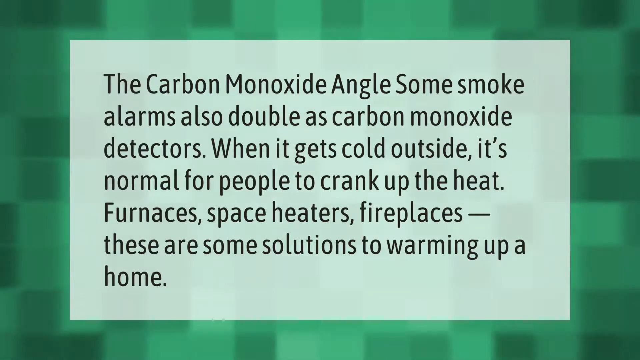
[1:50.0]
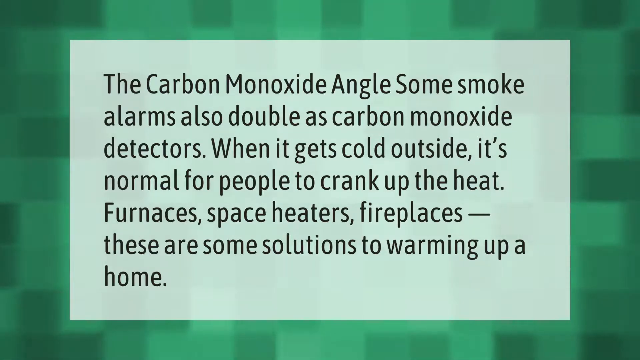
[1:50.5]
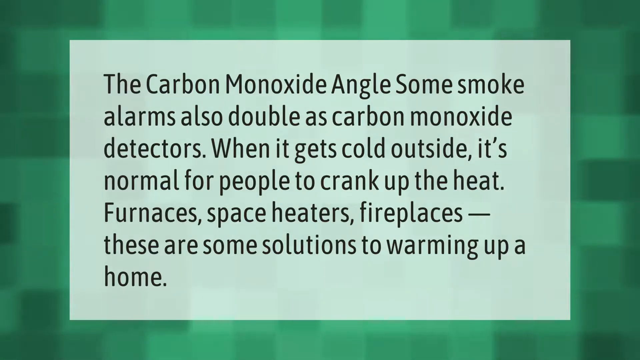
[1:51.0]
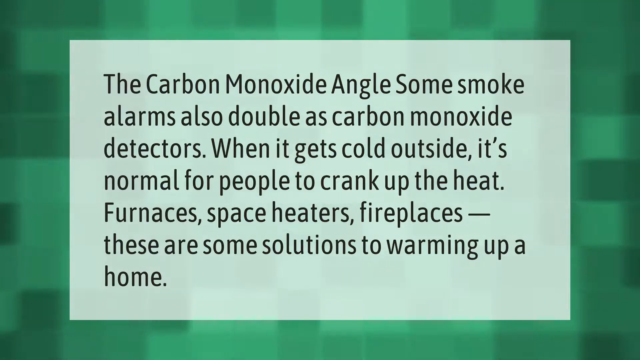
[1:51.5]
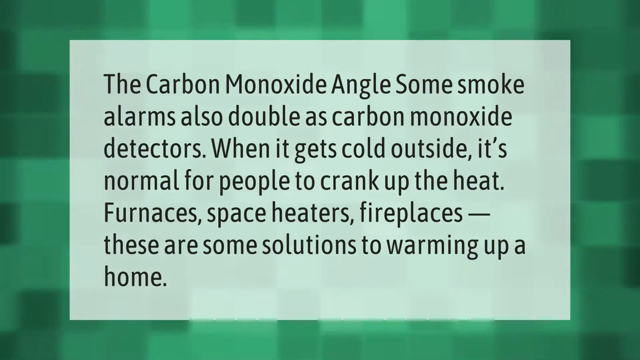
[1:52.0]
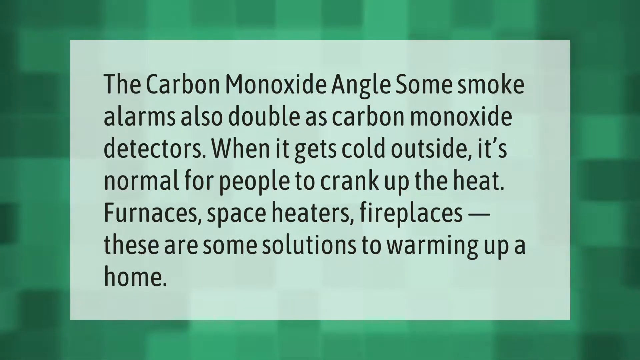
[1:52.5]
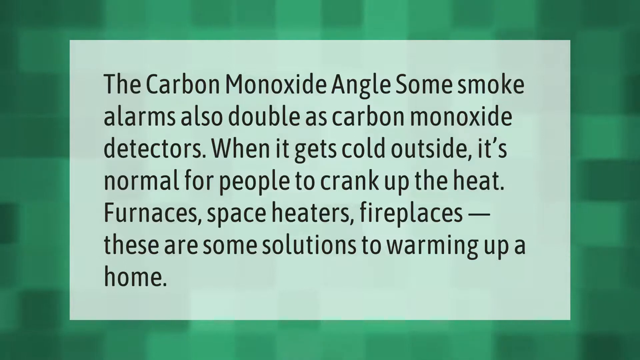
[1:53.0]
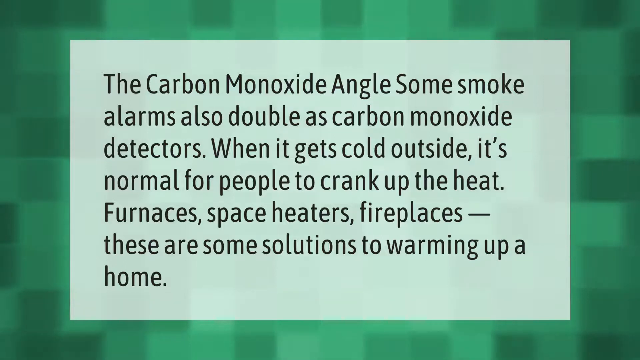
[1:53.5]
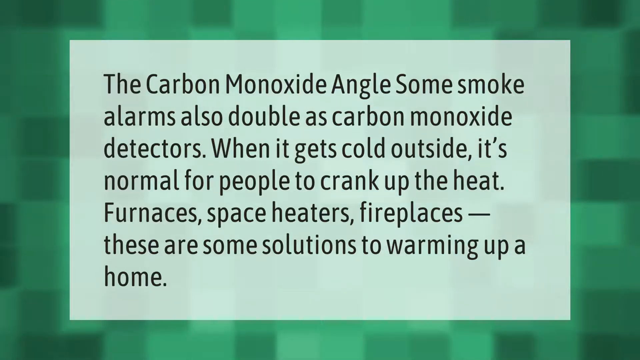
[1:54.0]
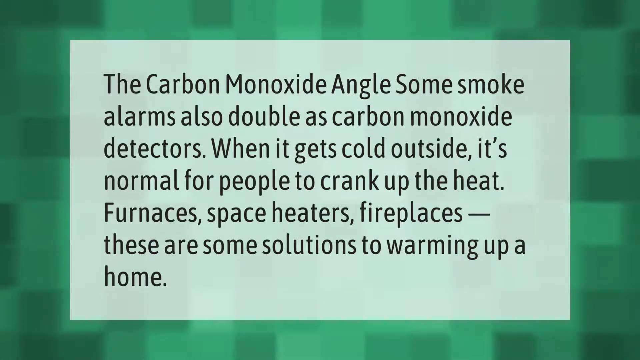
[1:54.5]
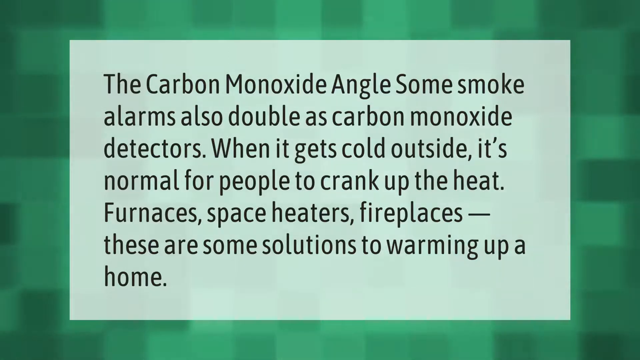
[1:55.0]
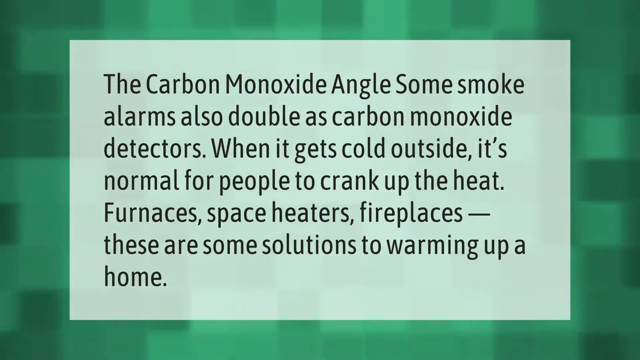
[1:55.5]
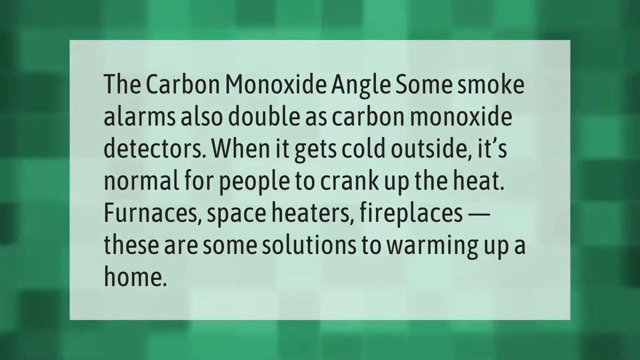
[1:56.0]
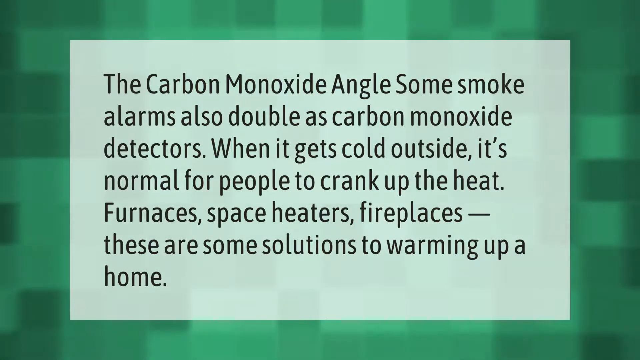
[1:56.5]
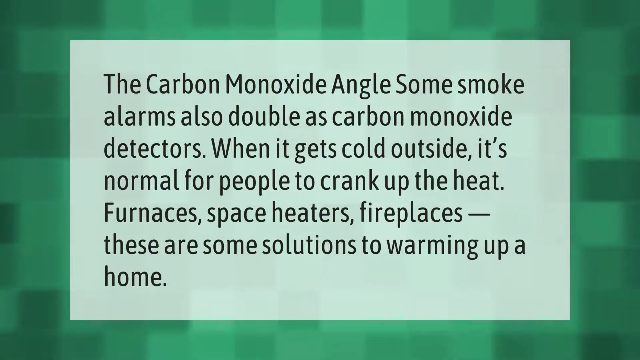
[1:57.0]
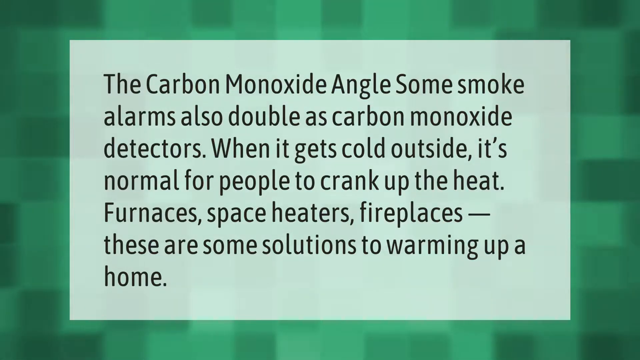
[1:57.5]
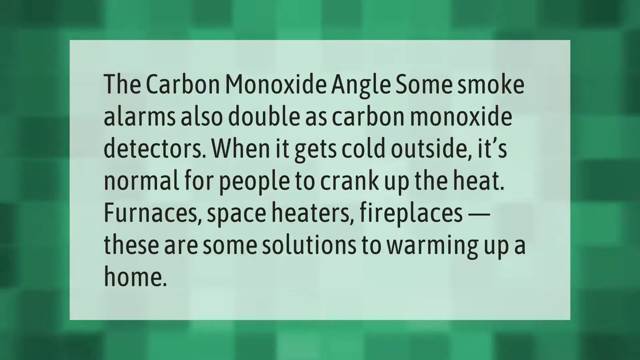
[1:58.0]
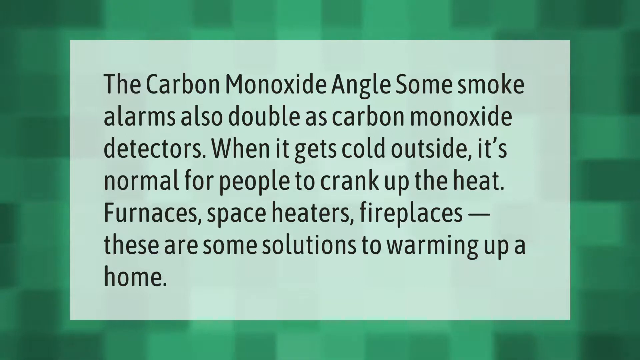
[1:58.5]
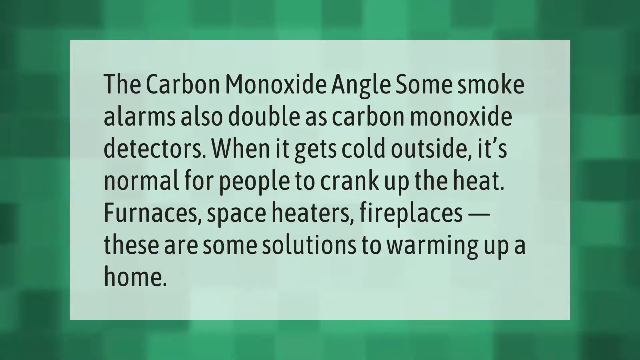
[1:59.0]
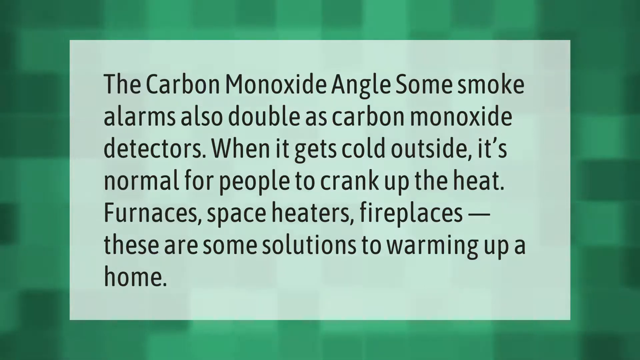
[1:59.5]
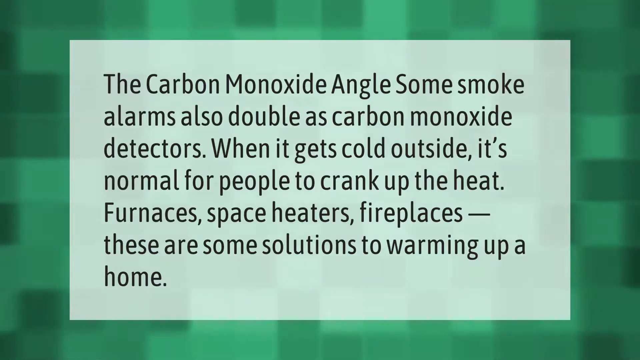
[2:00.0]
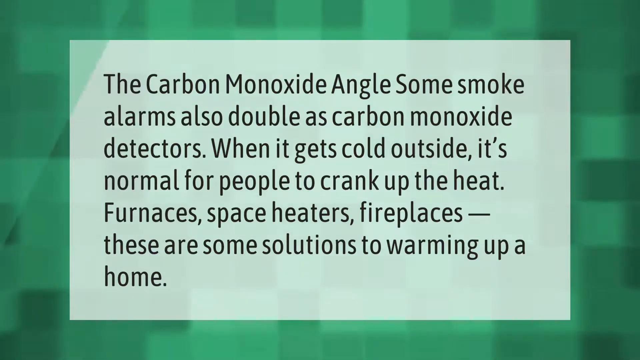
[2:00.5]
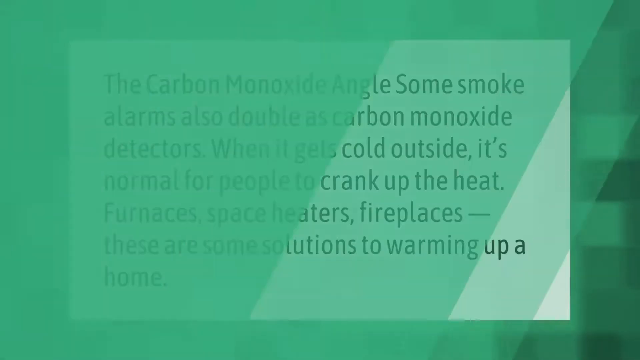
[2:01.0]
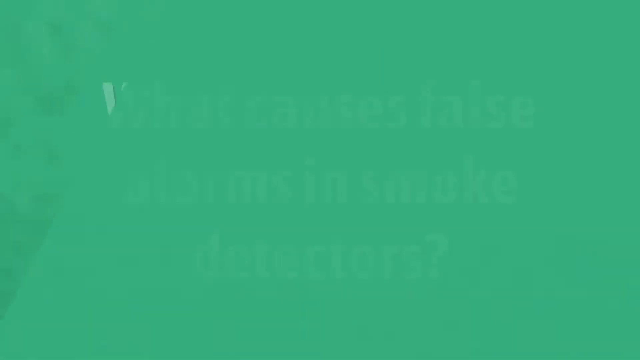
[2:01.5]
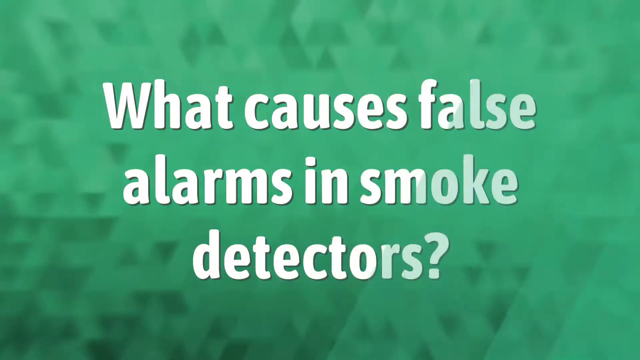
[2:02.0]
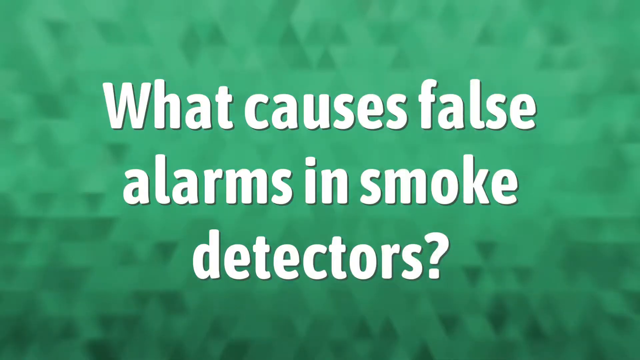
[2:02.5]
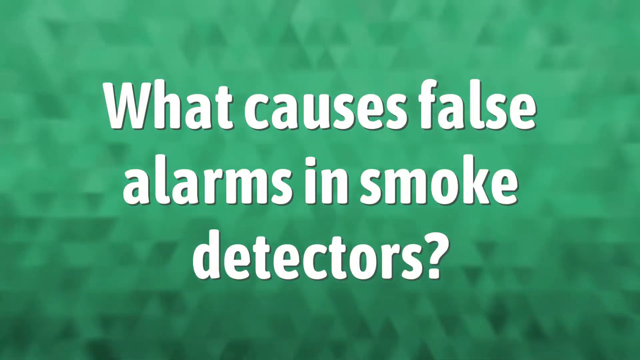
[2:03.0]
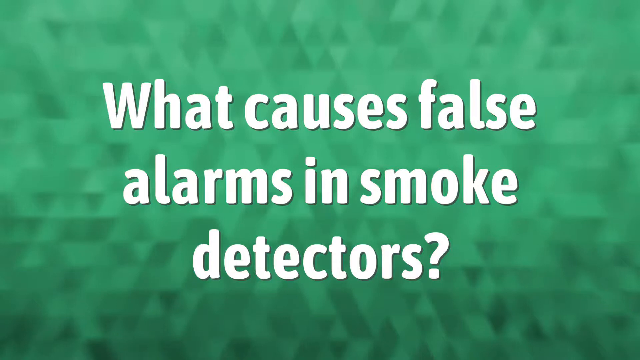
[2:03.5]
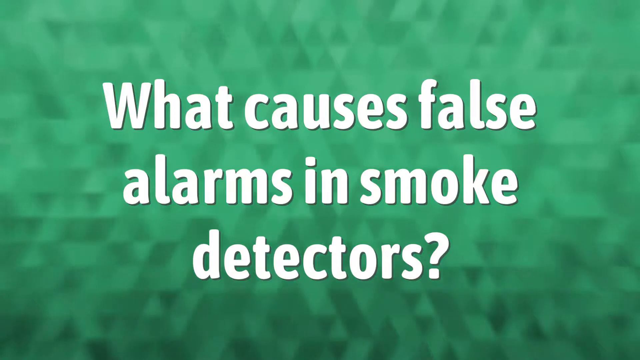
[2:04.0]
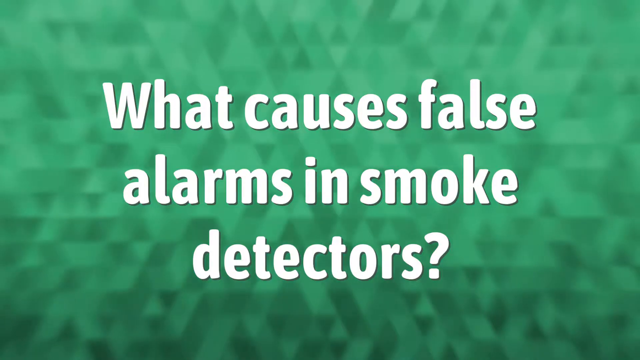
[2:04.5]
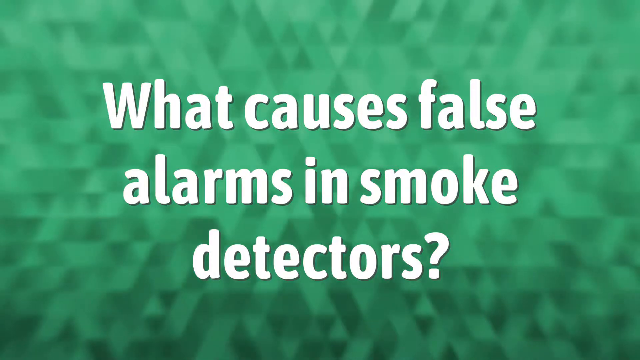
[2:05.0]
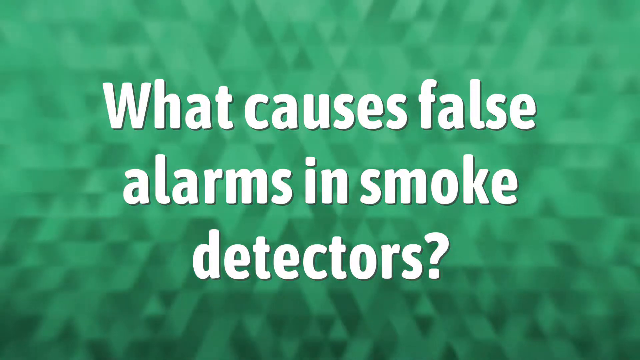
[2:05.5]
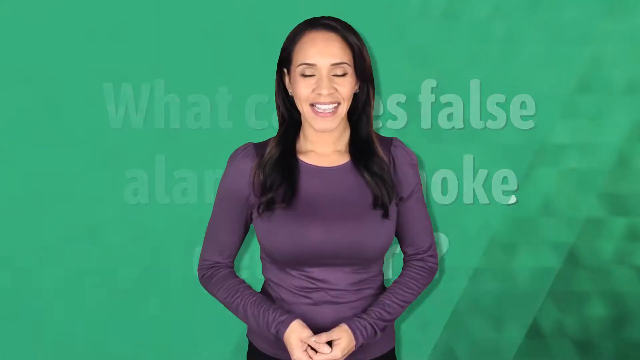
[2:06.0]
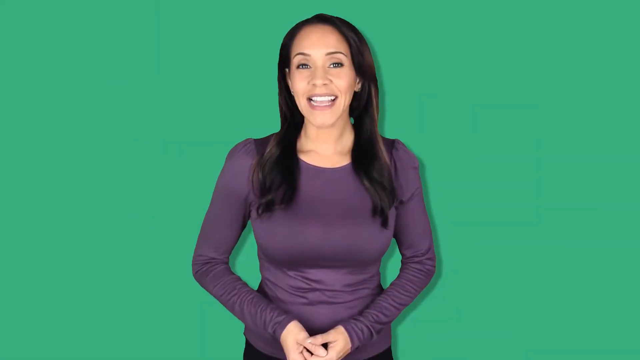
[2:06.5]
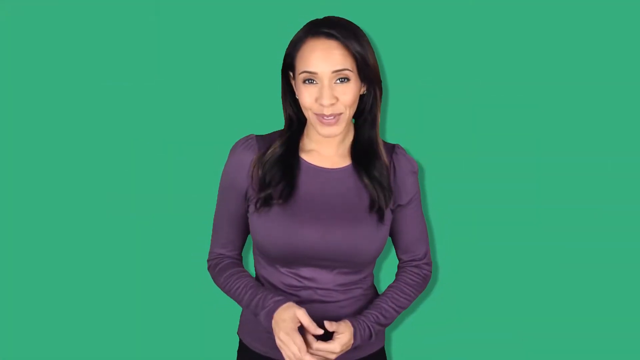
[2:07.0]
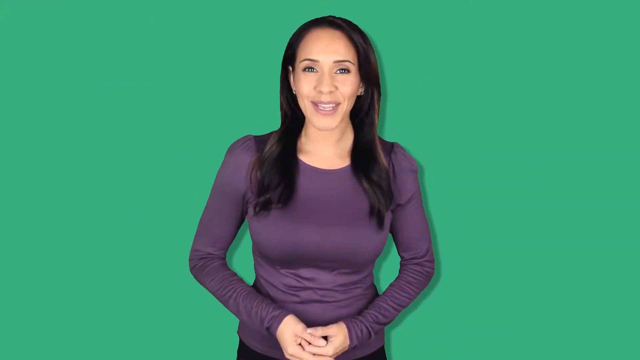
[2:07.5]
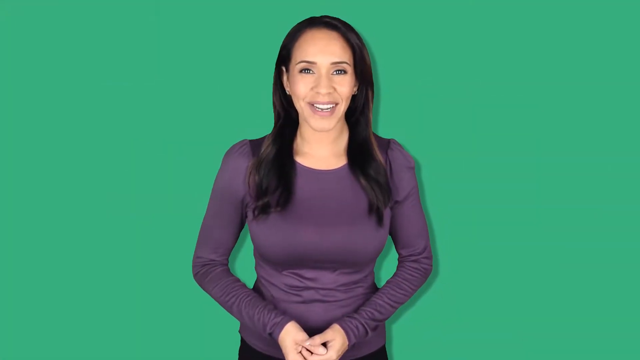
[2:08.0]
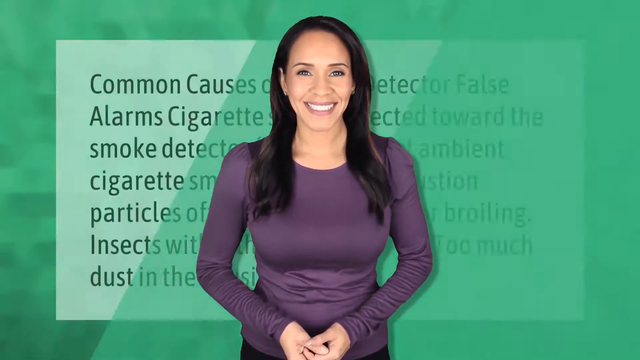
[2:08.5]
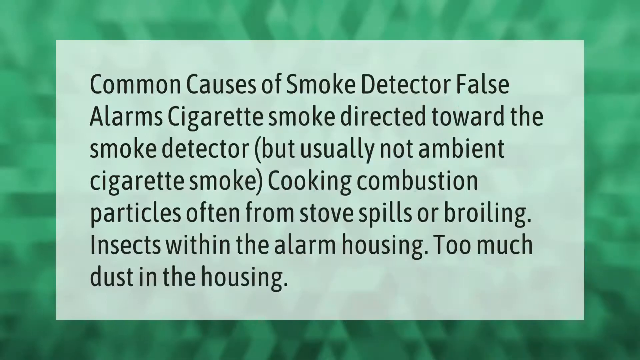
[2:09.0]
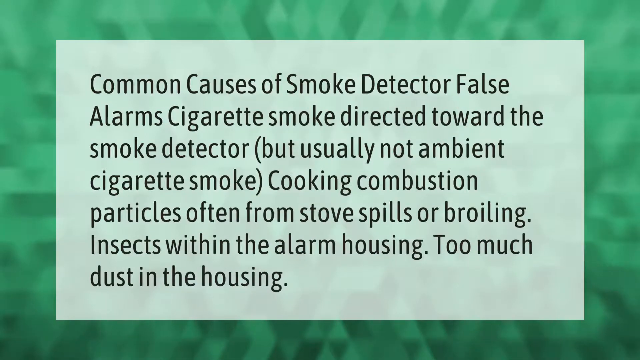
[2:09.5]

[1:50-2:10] The screen reads "The carbon monoxide angle. Smoke alarms also double as carbon monoxide detectors. When it gets cold outside, it's normal for people to crank up the heat. Furnaces, space heaters, fireplaces, these are some solutions to warming up a home." Next comes "What causes false alarm and smoke detectors?" and the woman speaks toward the camera. Then the text "Common causes of smoke detectors false alarms" appears with a list: "cigarette smoke directed toward the smoke detector, but usually not ambient cigarette smoke, cooking combustion," "insects within the alarm housing, too much dust in the housing." The woman speaks intently toward the camera.